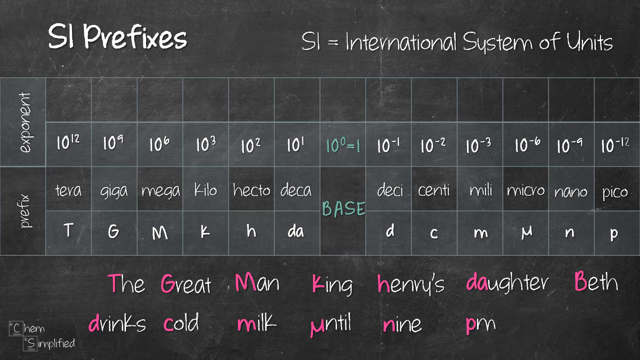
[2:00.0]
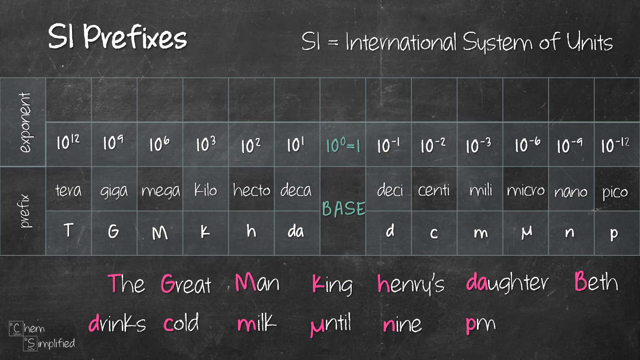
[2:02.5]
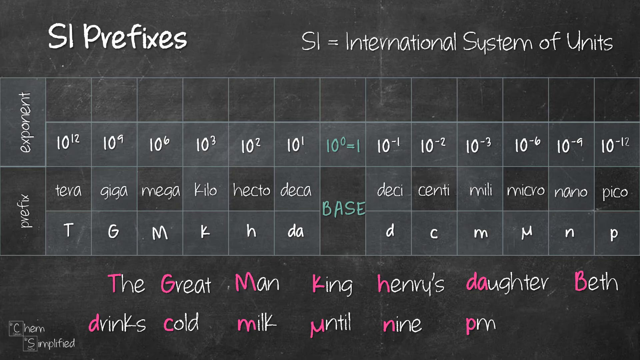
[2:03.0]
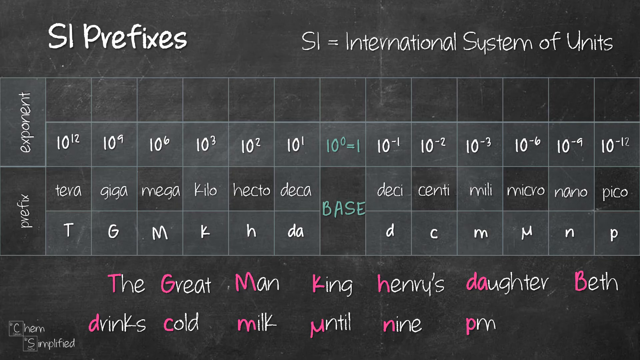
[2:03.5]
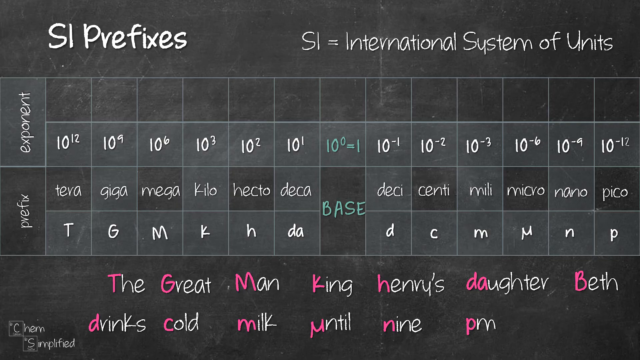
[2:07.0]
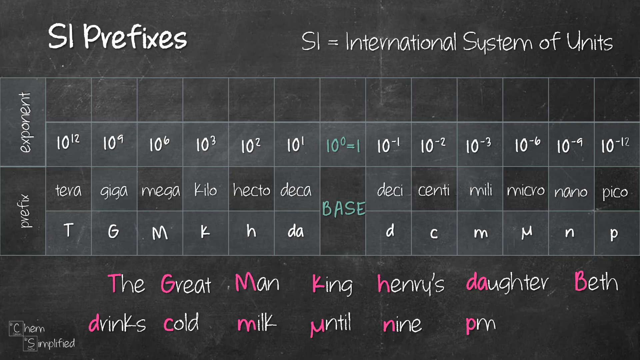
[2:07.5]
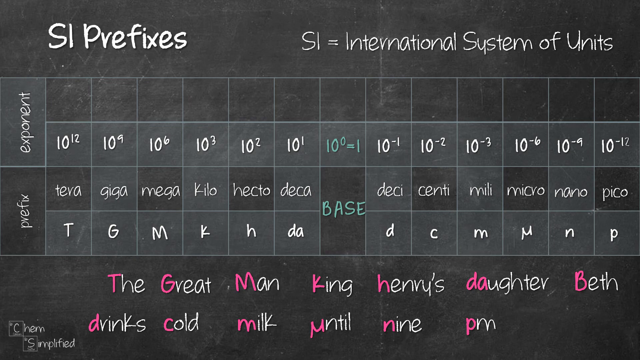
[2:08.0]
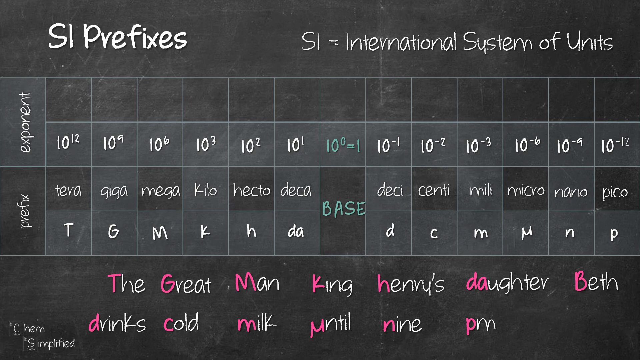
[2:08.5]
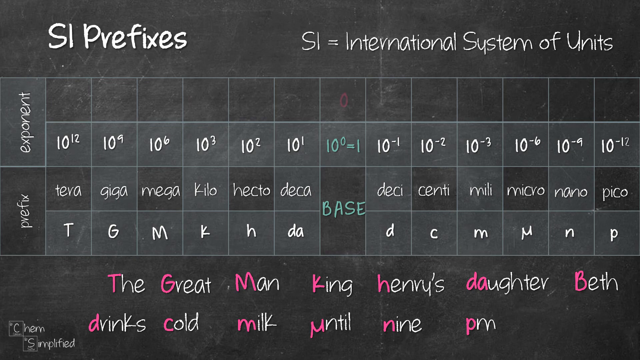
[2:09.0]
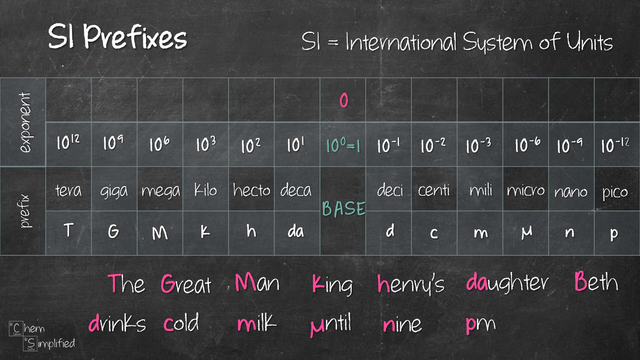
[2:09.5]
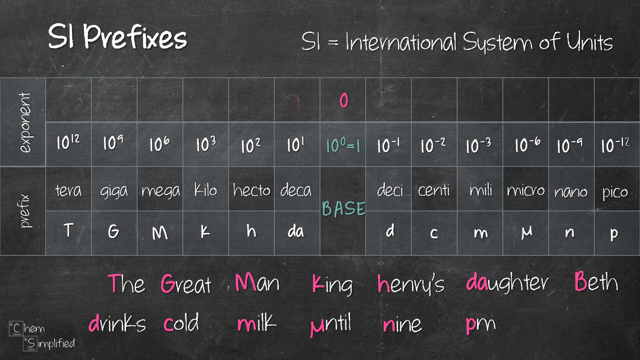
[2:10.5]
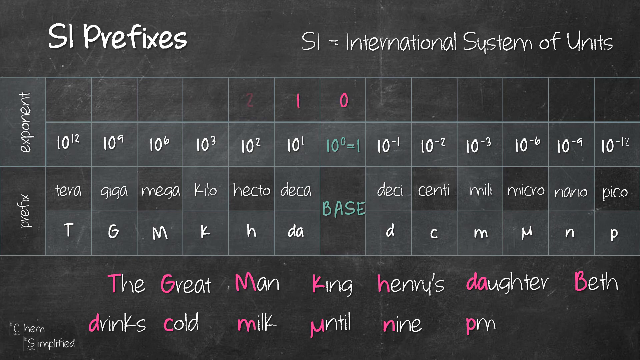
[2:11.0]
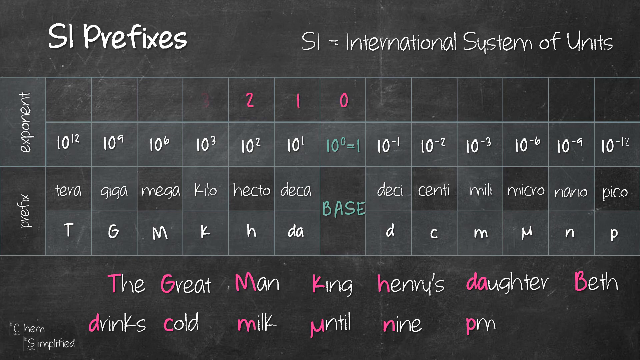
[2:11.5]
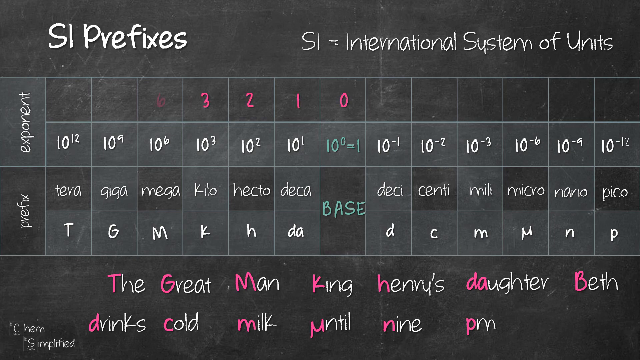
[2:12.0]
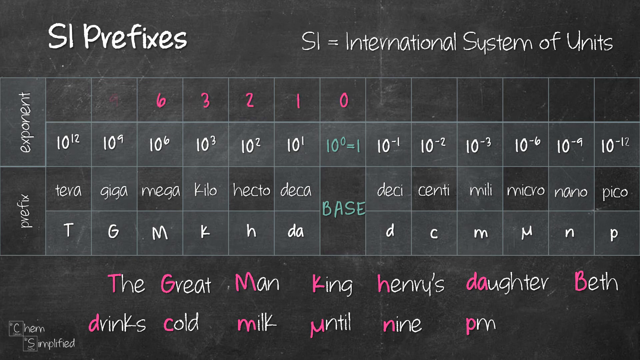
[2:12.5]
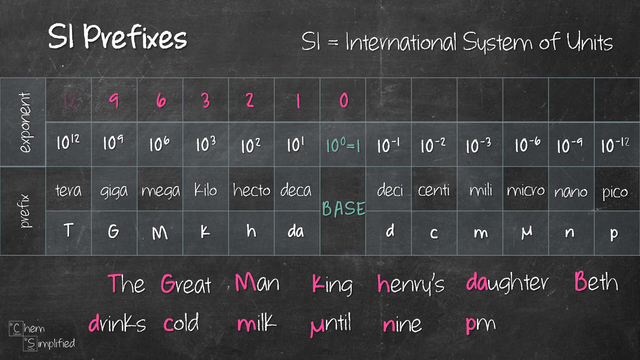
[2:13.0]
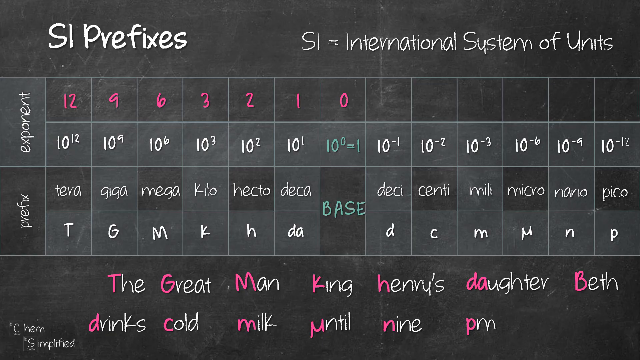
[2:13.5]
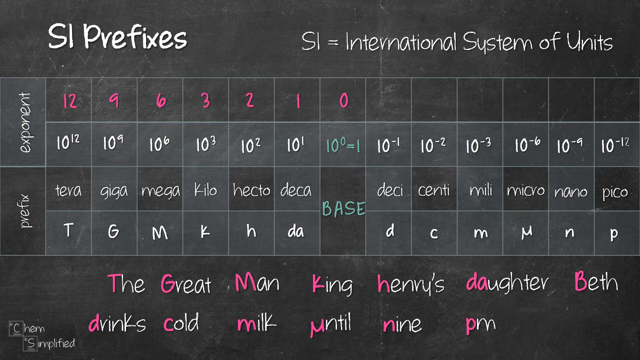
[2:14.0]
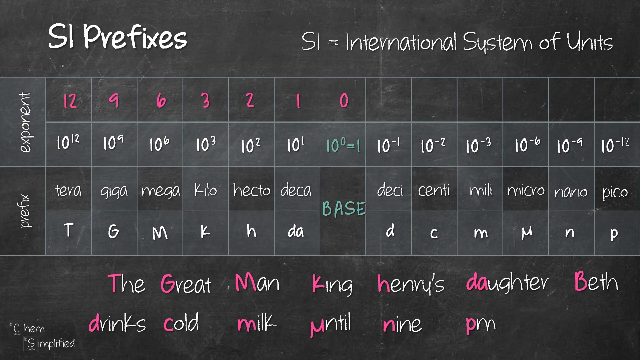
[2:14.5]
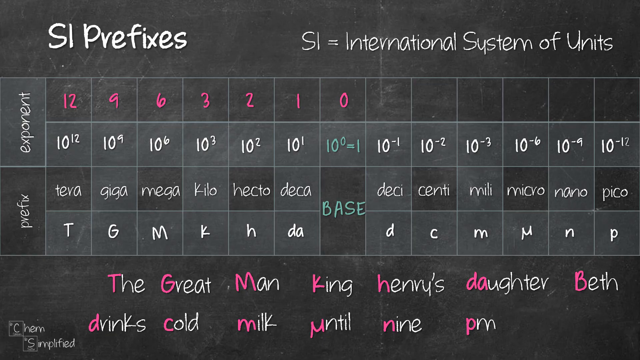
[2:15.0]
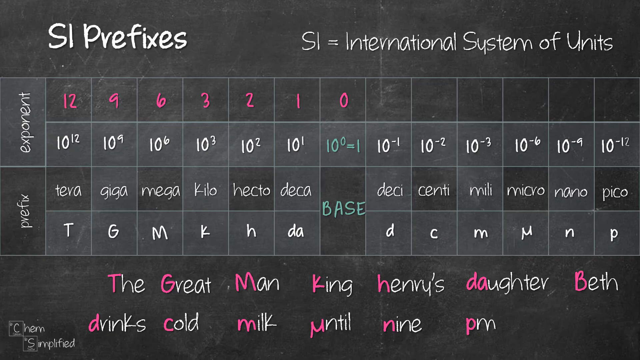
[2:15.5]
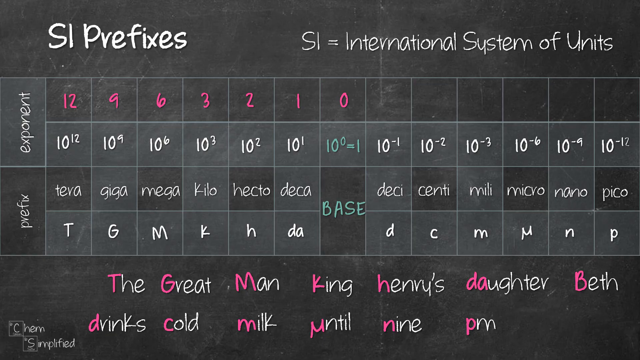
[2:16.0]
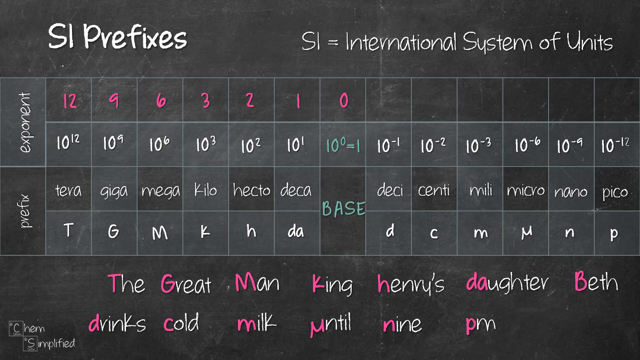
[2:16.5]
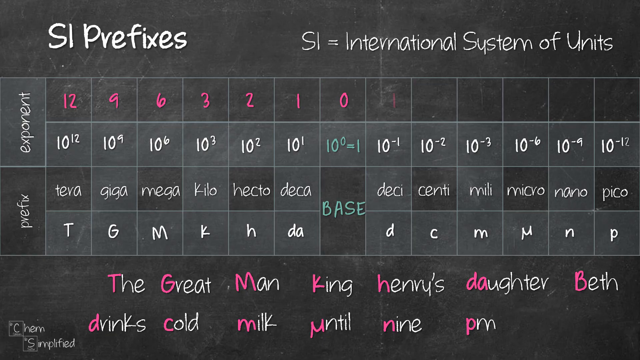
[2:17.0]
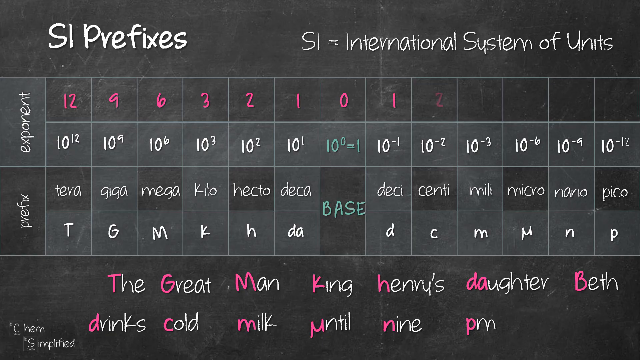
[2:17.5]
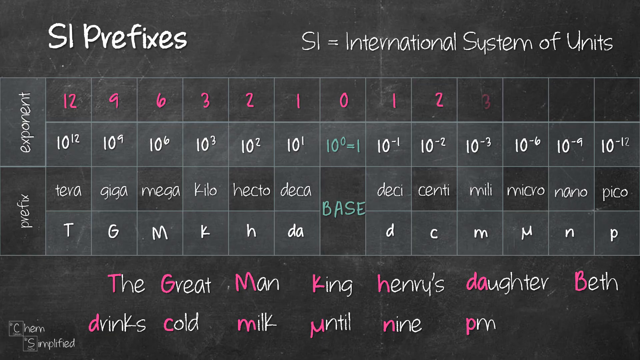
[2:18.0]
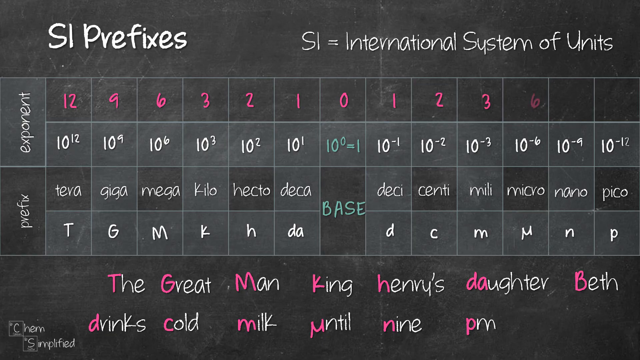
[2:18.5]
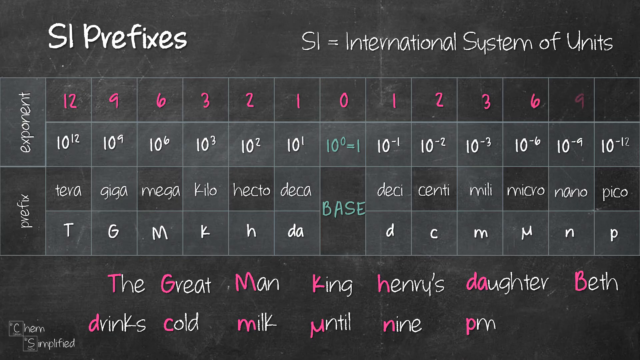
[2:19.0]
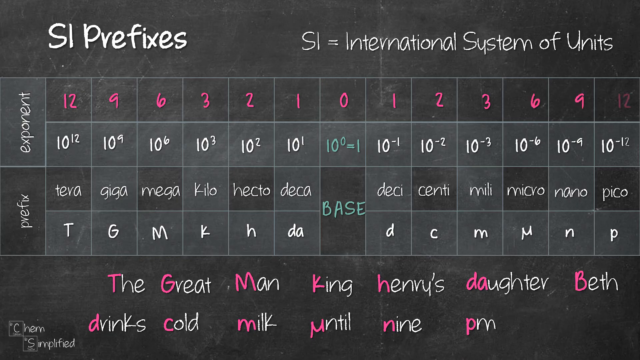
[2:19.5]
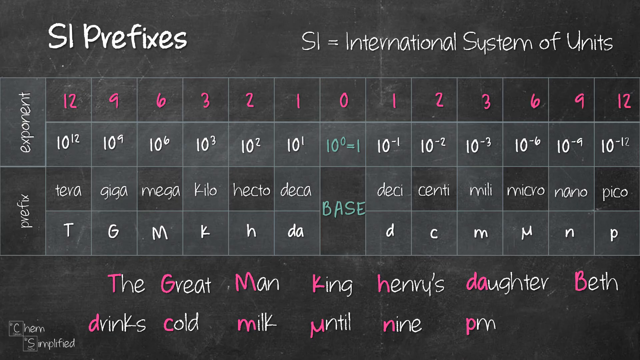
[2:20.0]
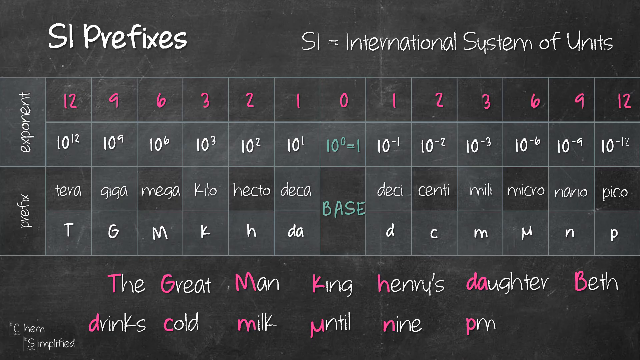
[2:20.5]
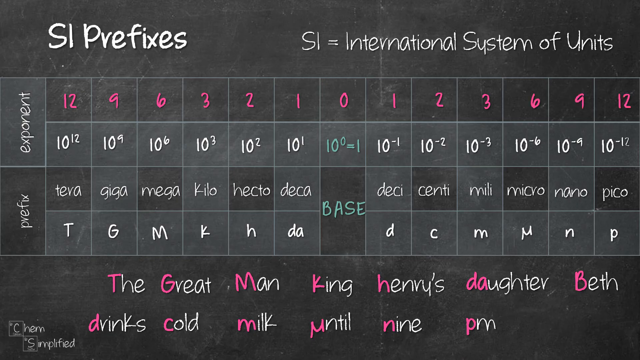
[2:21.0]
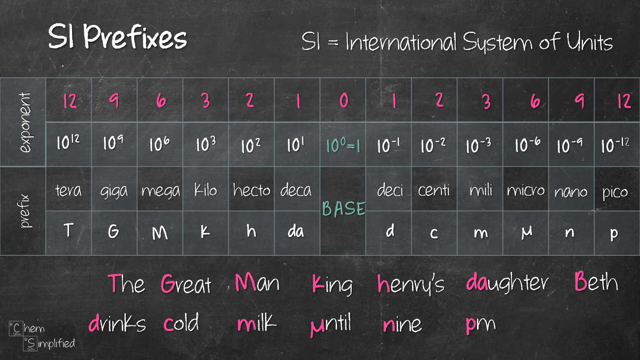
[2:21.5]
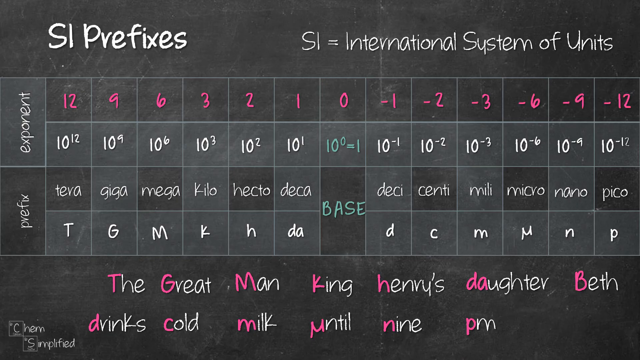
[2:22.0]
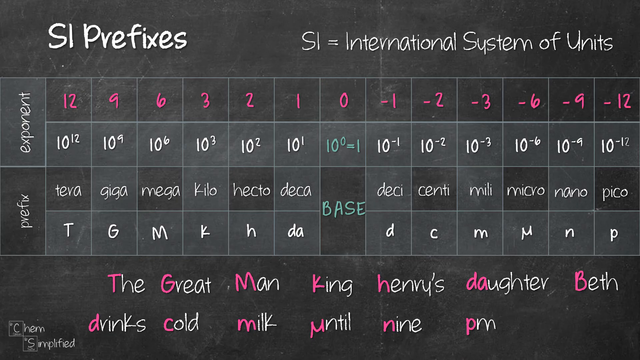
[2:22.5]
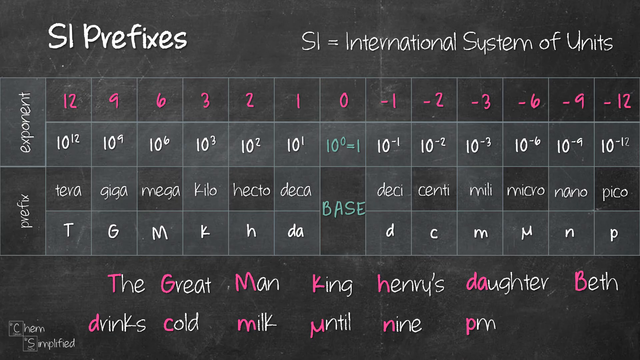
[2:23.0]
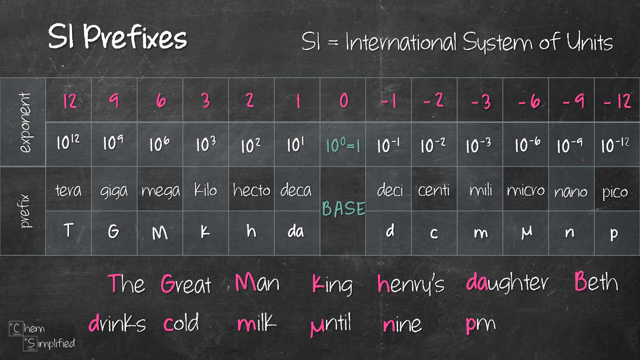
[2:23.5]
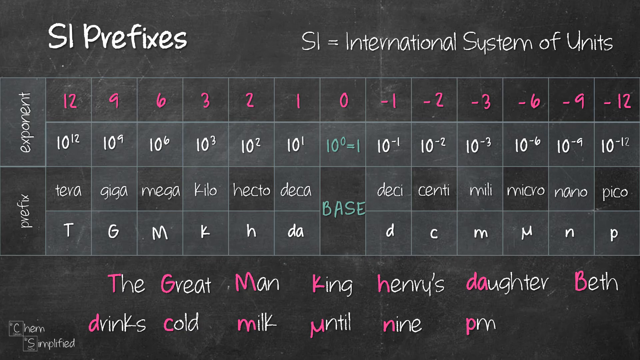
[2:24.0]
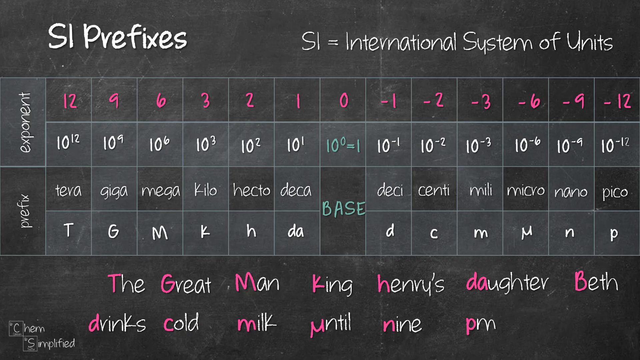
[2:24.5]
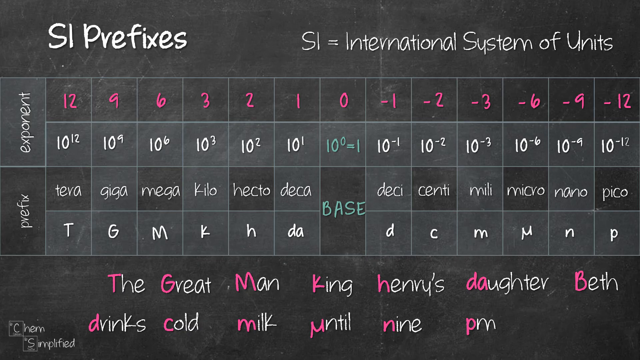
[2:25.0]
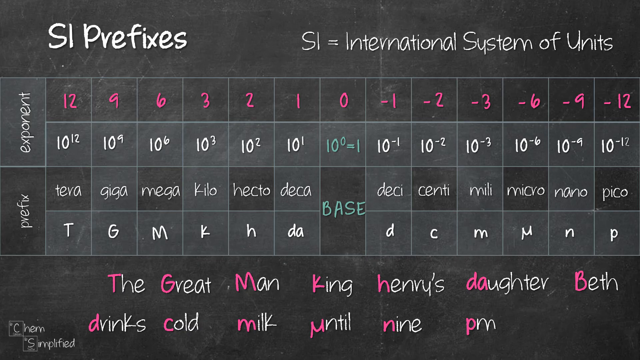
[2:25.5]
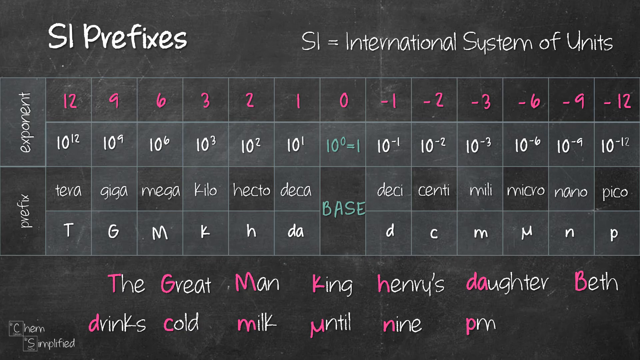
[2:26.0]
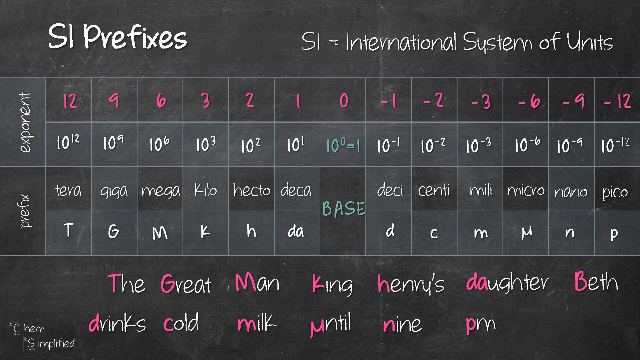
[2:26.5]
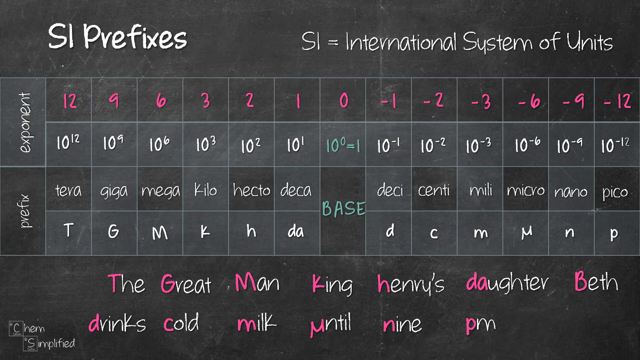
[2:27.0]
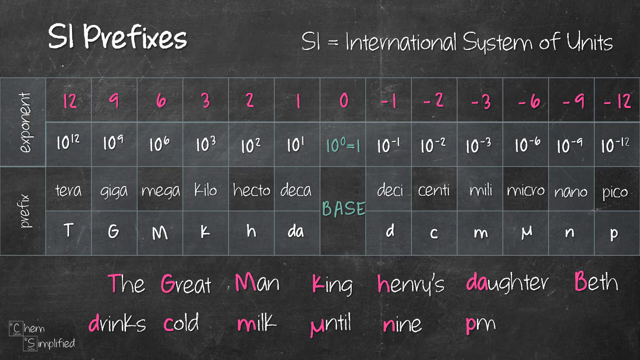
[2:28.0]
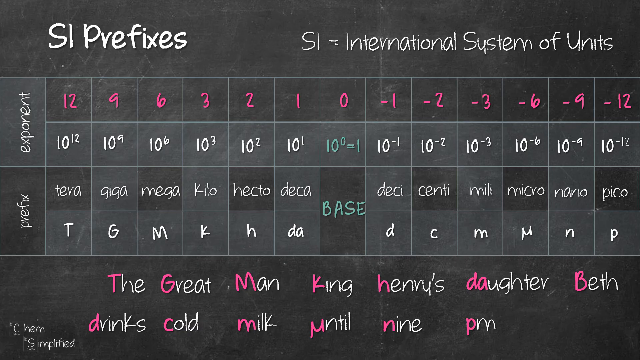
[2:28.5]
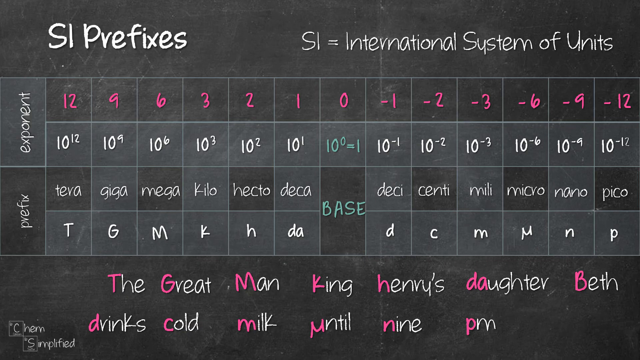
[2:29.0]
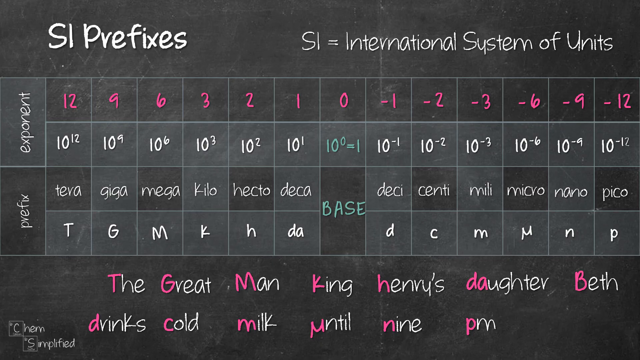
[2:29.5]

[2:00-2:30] A grid about the international system of units relates prefixes to their exponents. The exponents are listed across the grid, and right below them are the prefixes tera, giga, mega, kilo, hecto, deca, base, deci, centi, milli, micro, nano and pico. A mnemonic reads "the great man King Henry's daughter Beth drinks cold milk until 9 p.m.", with the first letter of each word highlighted in pink to match the prefixes on the chart in order. Above them the exponents read 10 to the 12th, 10 to the 9th, 10 to the 6th, 10 to the 3rd, 10 to the 2nd, 10 to the 1st, 10 to the 0 equal to 1 for "BASE", then 10 to the negative 1, 10 to the negative 2, 10 to the negative 3, 10 to the negative 6, 10 to the negative 9 and 10 to the negative 12.